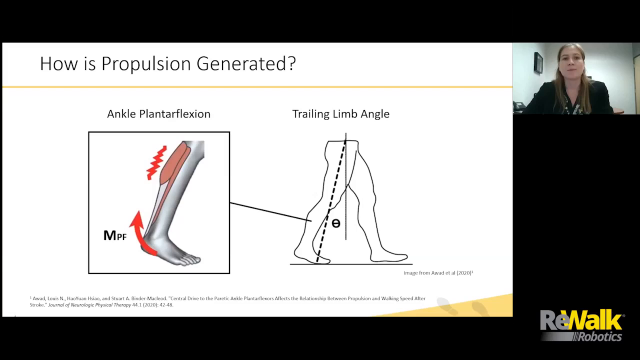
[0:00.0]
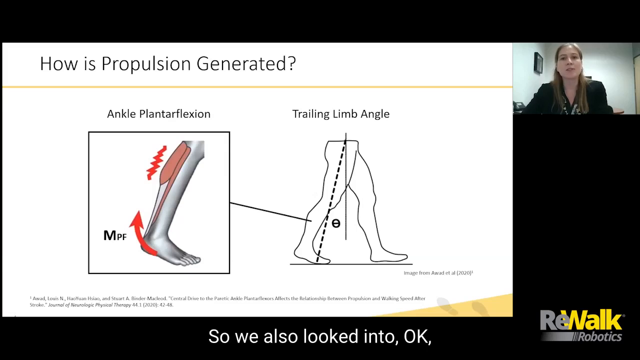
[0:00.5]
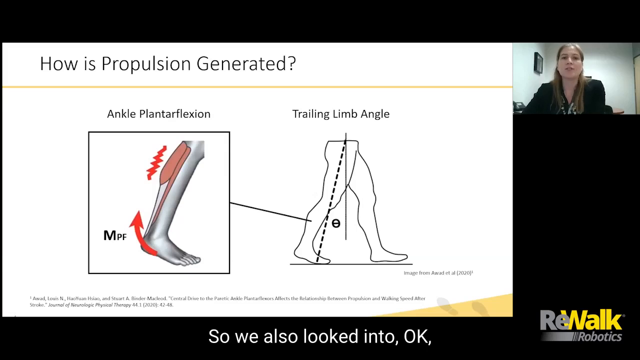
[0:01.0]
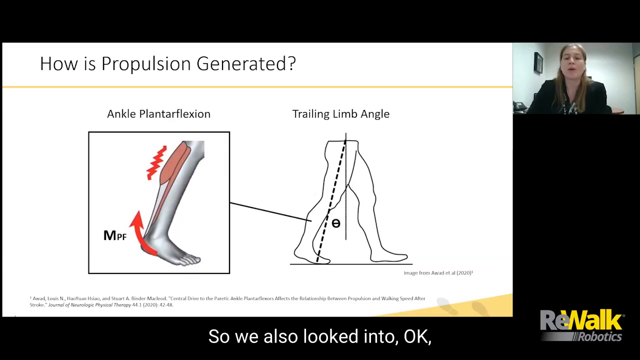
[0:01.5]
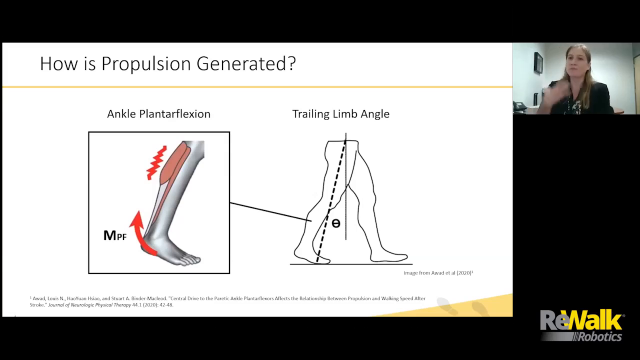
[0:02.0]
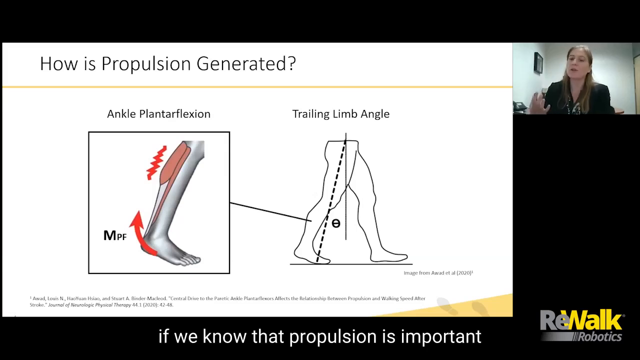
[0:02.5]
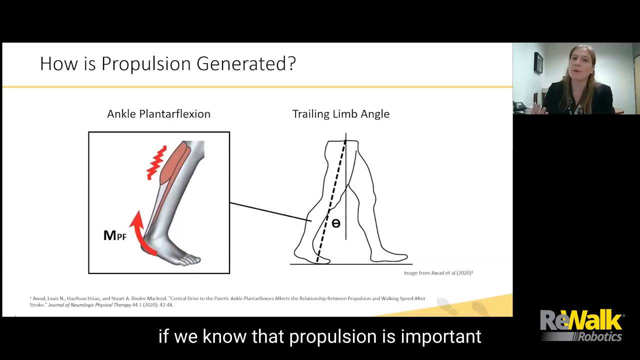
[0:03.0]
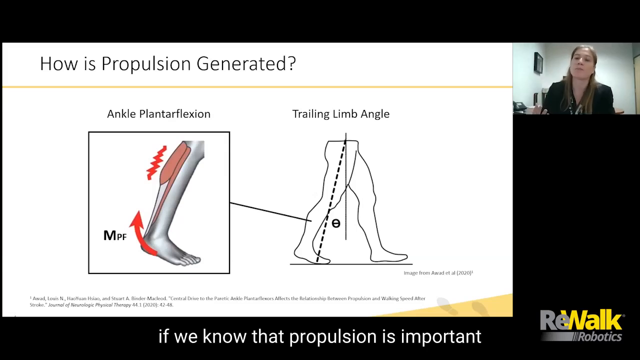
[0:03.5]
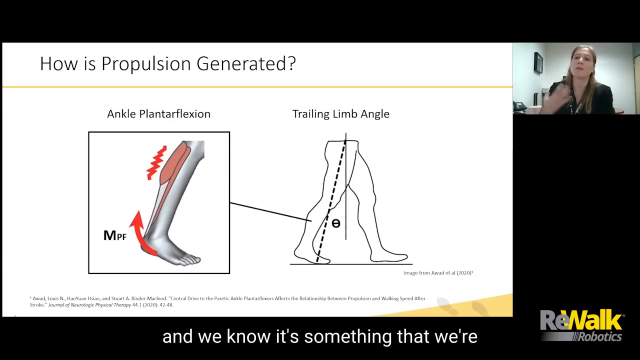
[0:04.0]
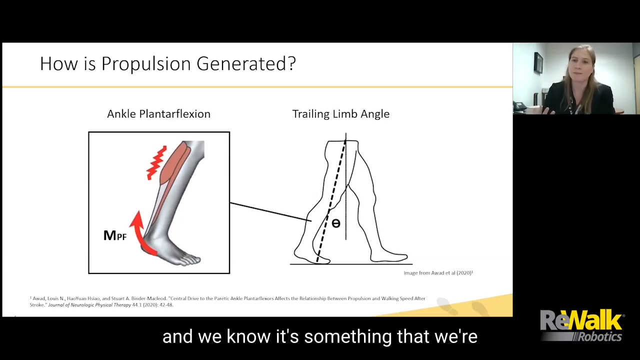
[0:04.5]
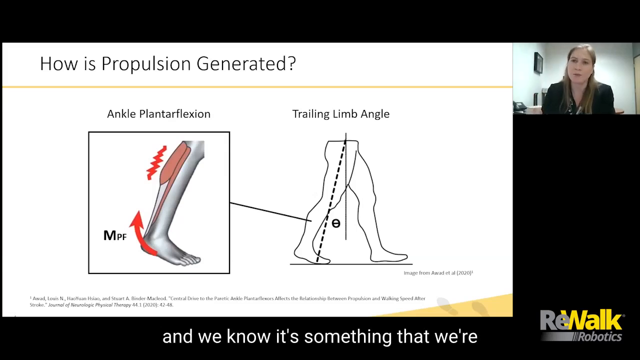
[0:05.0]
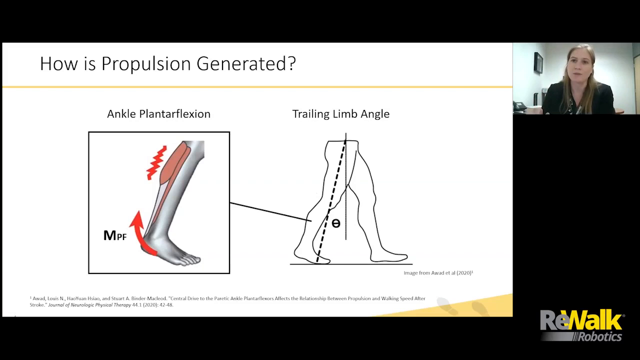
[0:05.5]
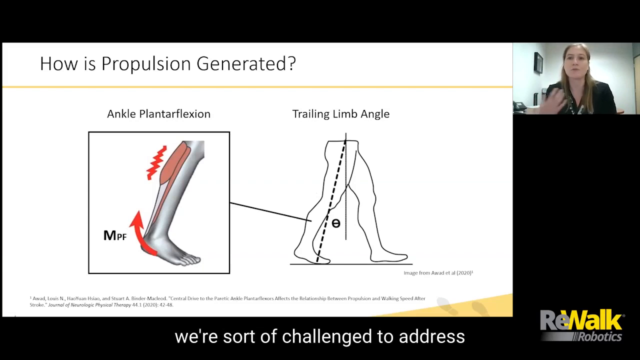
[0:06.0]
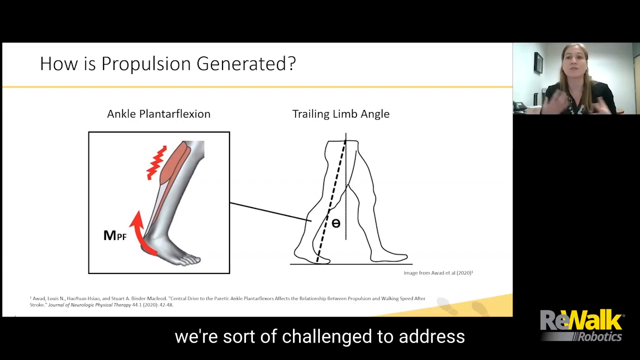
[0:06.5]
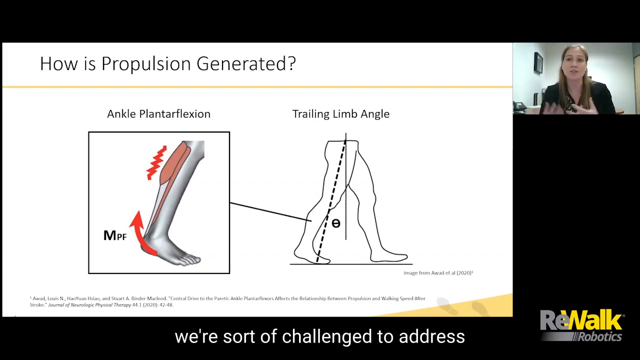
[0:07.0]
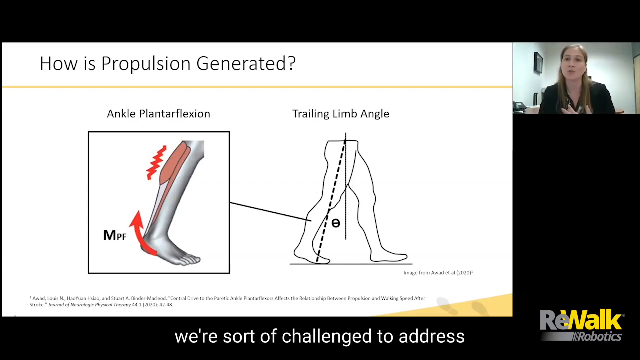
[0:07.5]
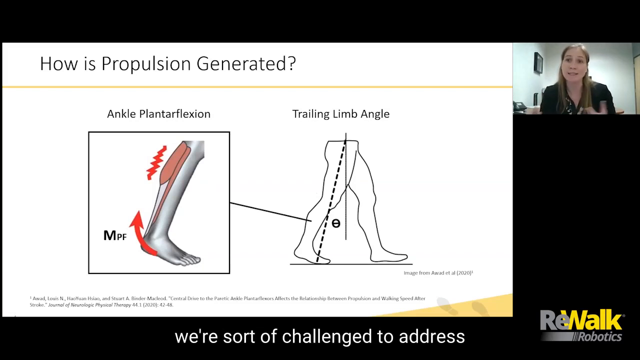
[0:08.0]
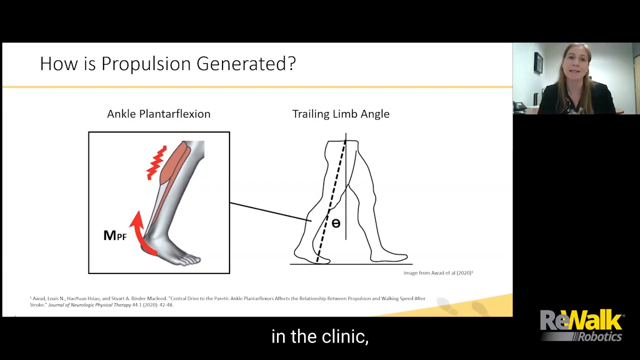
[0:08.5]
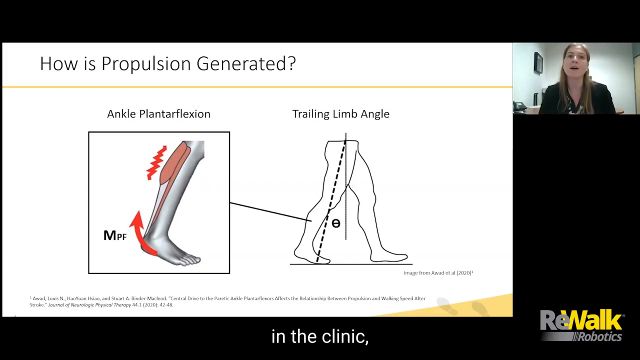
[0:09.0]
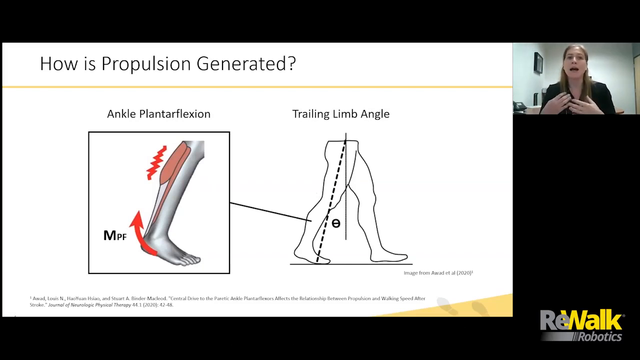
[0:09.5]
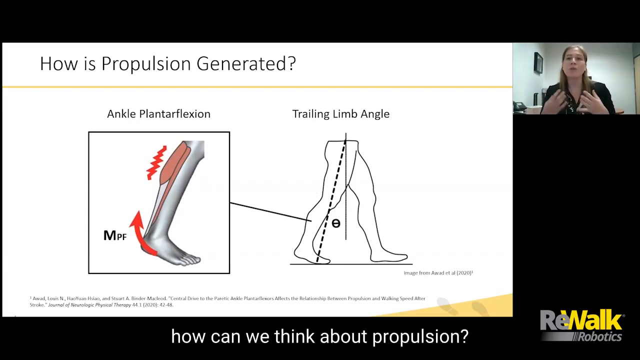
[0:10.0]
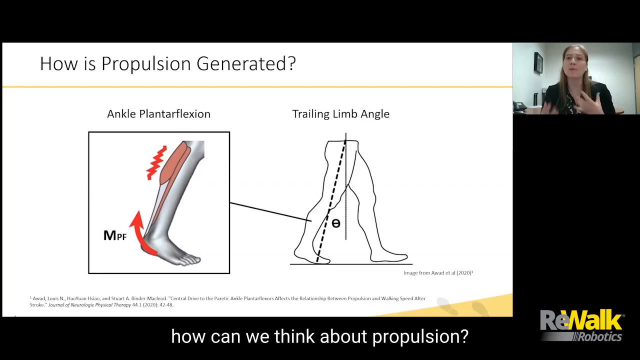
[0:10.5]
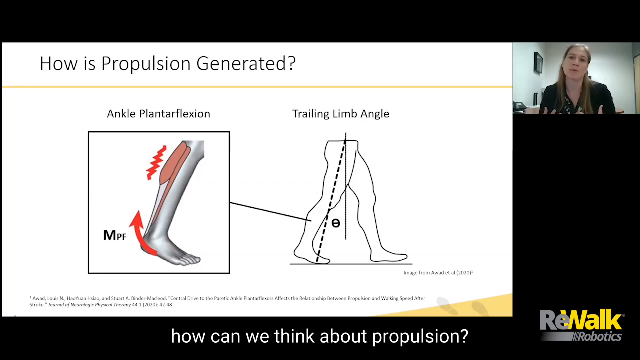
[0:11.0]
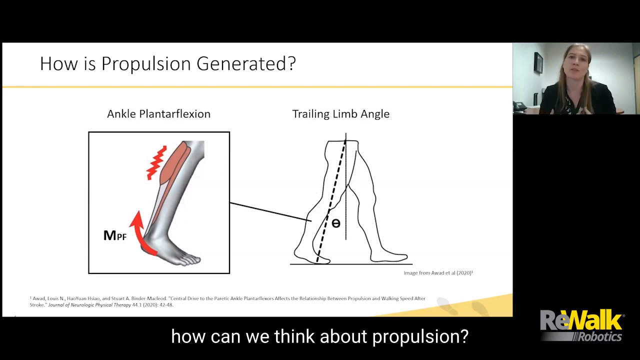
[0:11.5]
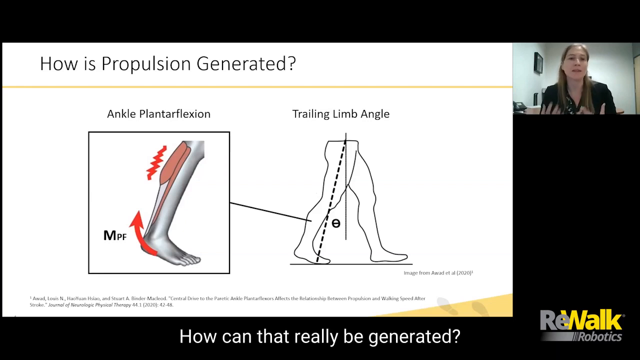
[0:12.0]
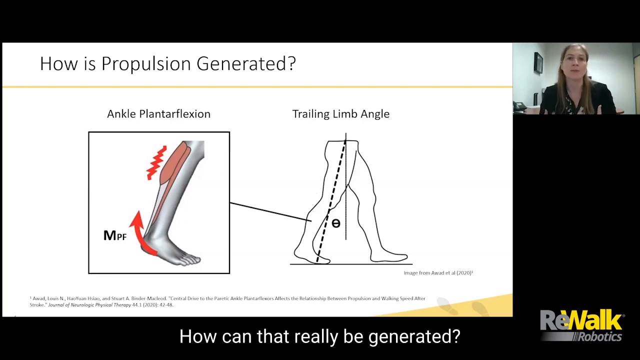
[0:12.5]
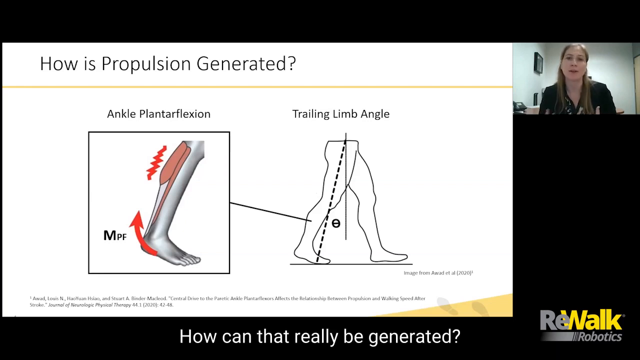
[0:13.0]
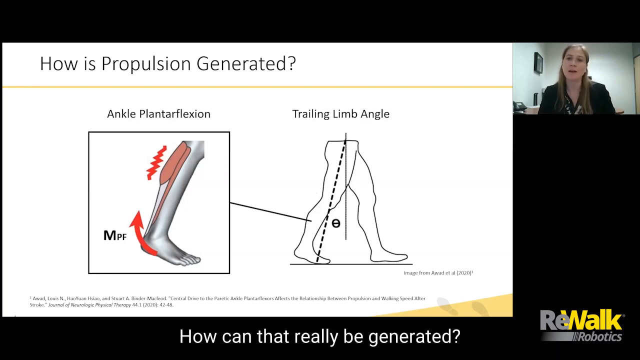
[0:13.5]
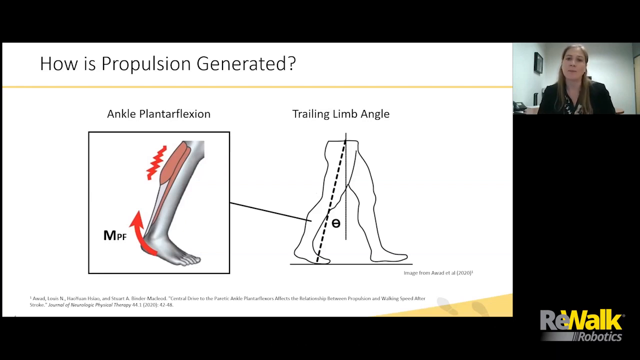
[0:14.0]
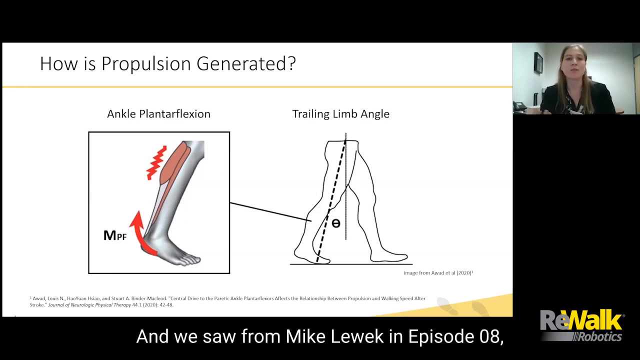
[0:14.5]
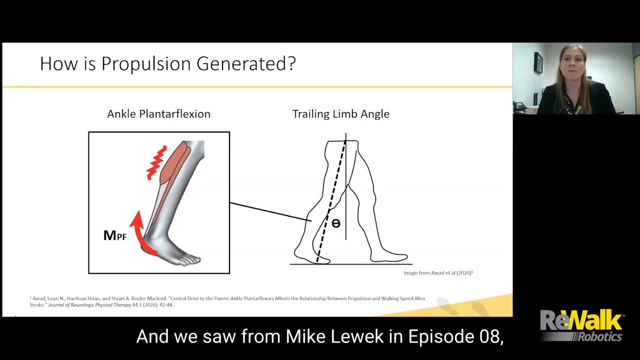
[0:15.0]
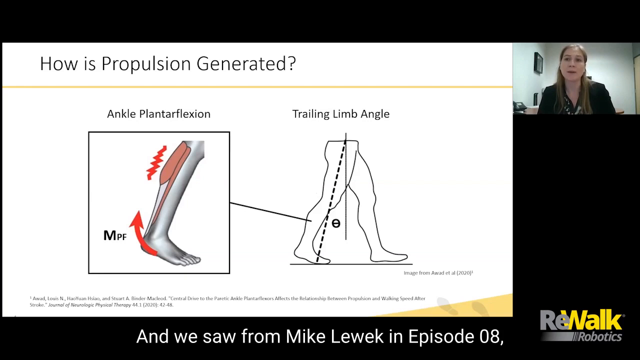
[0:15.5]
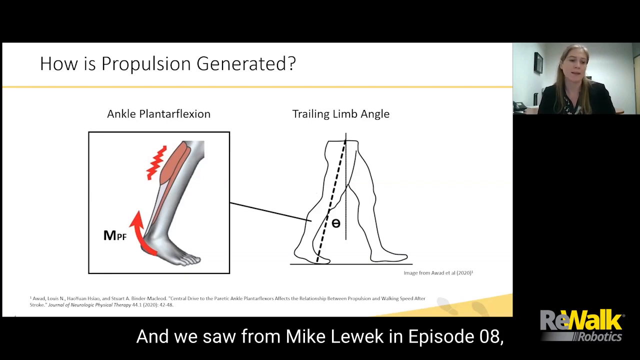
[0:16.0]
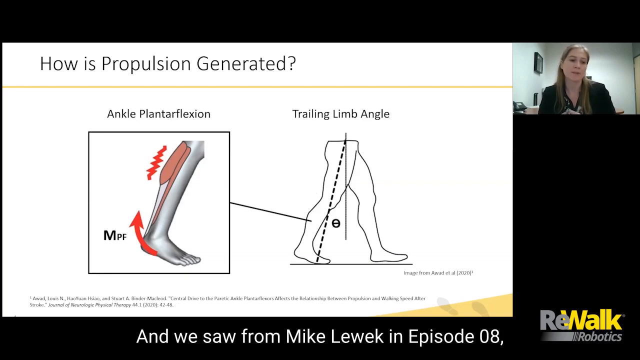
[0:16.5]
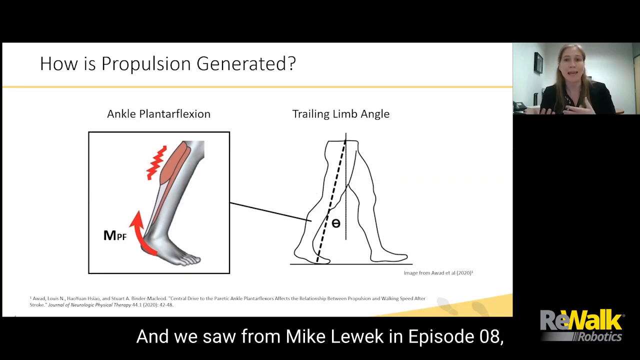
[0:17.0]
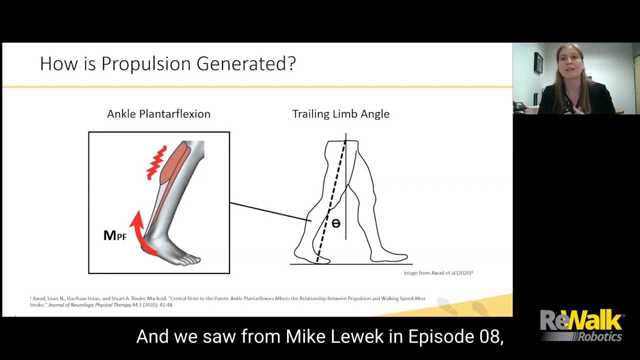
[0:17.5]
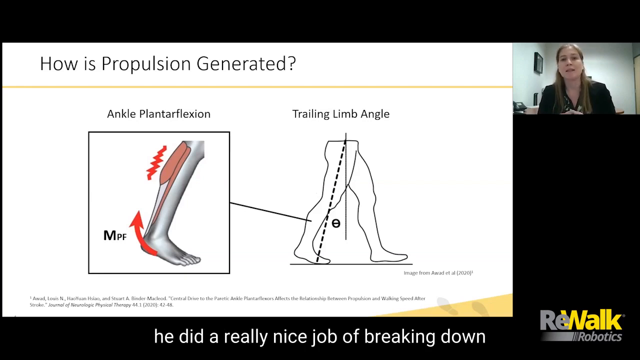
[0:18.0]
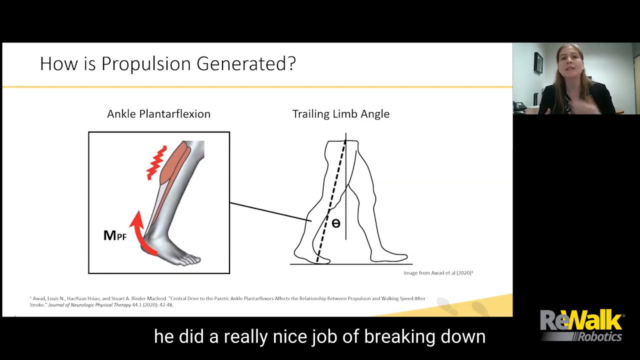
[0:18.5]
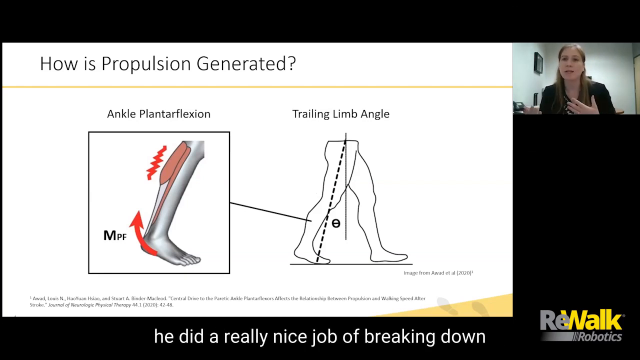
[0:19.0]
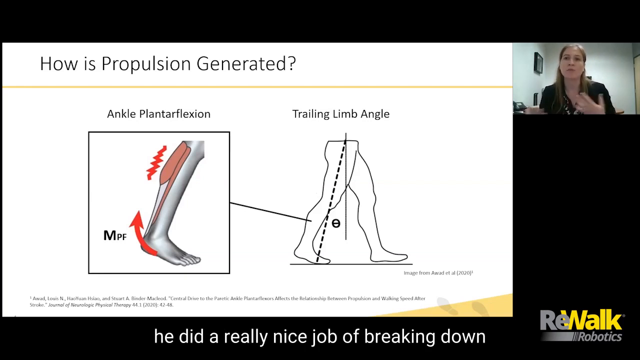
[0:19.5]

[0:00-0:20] Pictures appear on screen. The left picture is titled "ankle plantar flexion," and an arrow points upwards. The pictures show the left leg in front and the right leg in back, along with a trailing angle. The work is credited to Rewalk Robotics. A woman appears and is probably talking; she looks to be over 30.